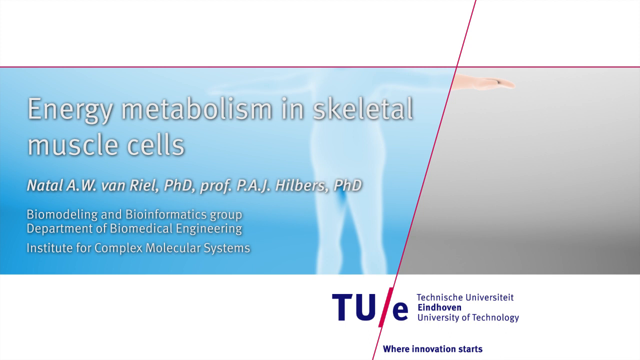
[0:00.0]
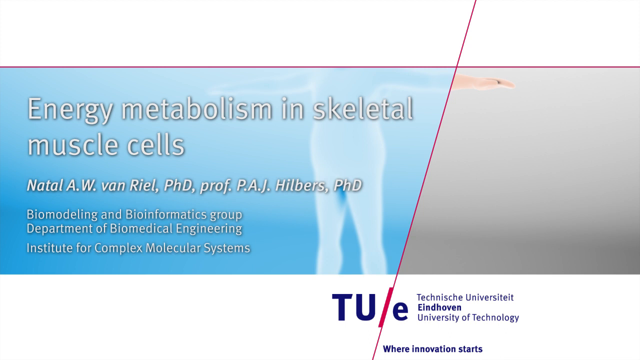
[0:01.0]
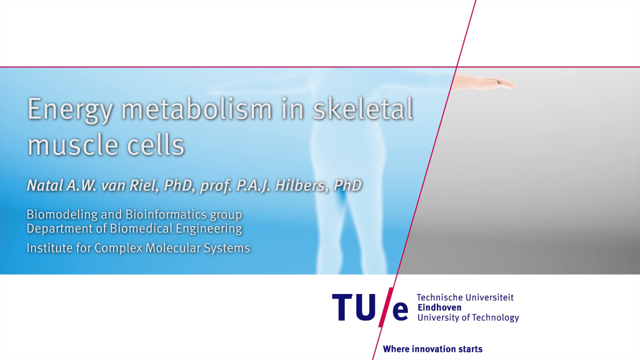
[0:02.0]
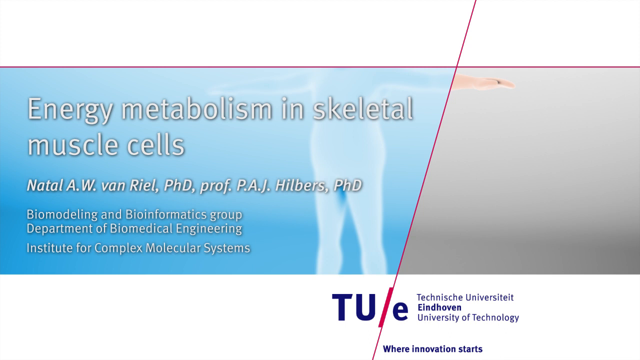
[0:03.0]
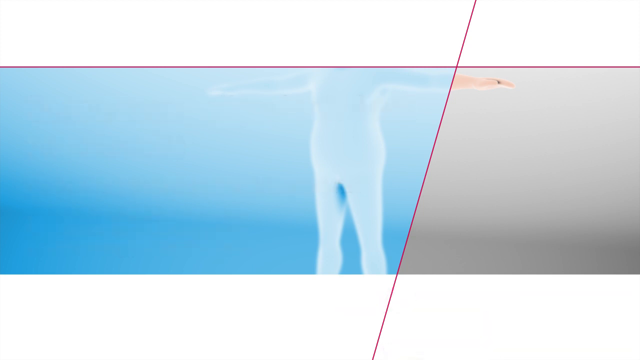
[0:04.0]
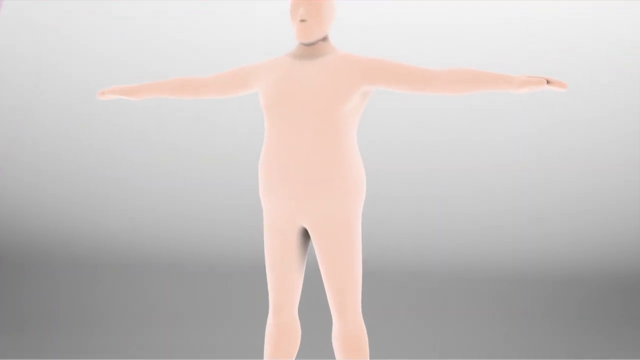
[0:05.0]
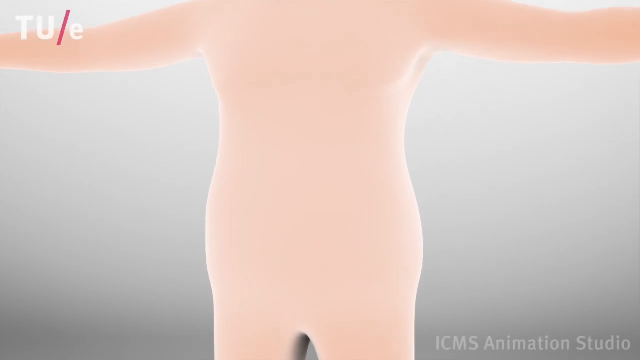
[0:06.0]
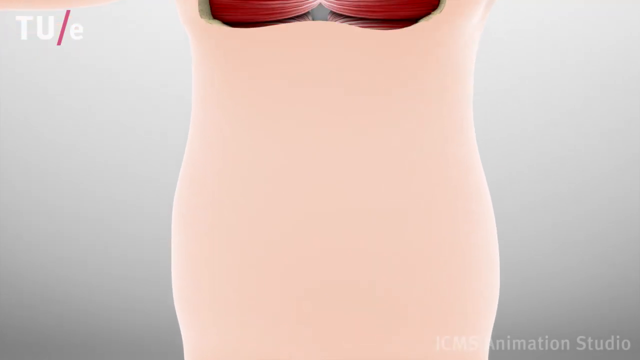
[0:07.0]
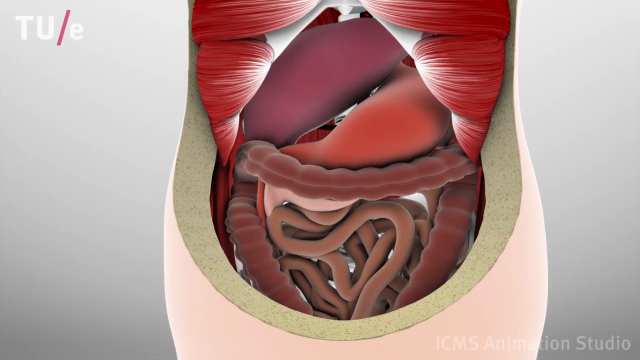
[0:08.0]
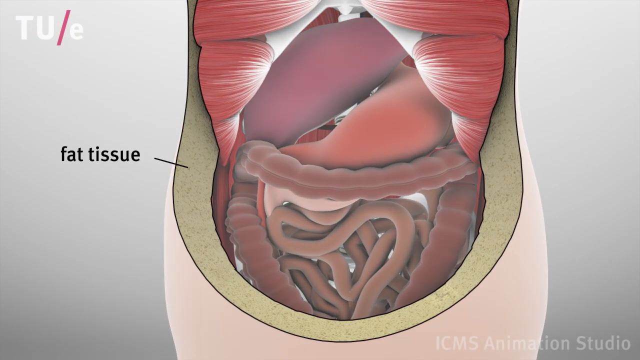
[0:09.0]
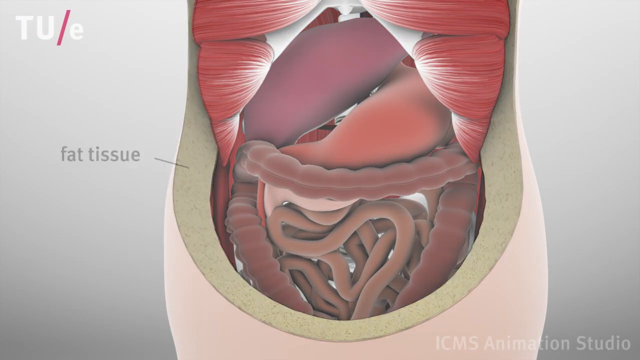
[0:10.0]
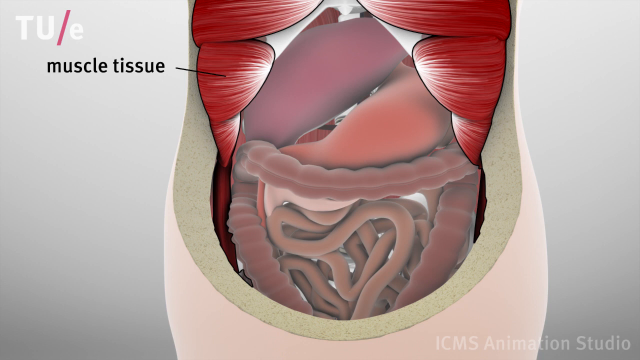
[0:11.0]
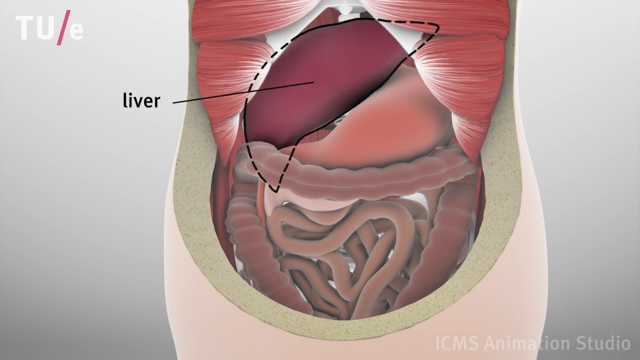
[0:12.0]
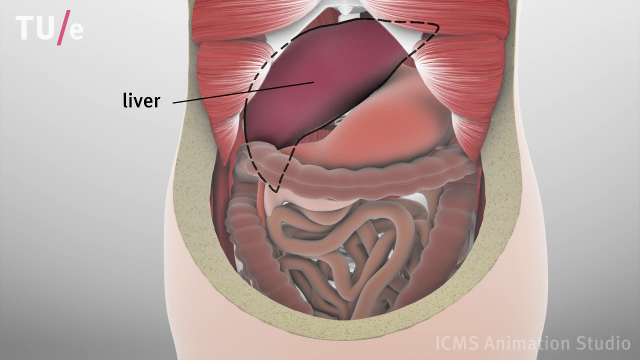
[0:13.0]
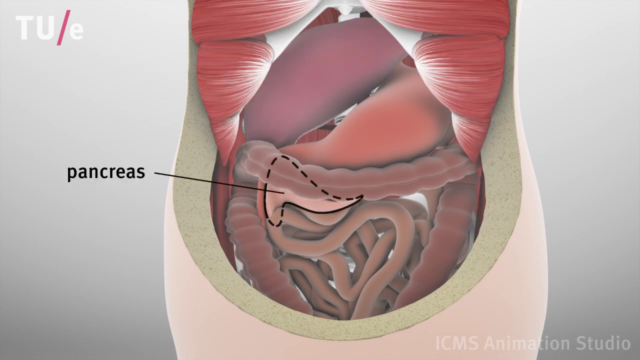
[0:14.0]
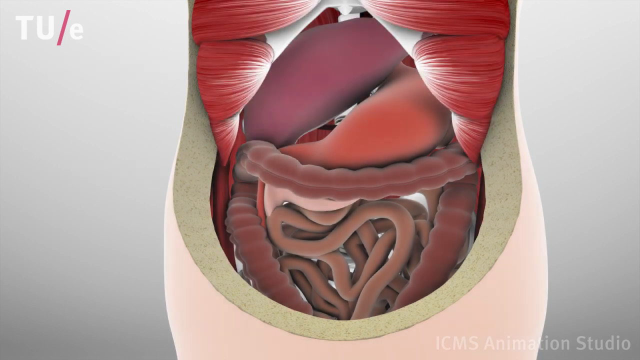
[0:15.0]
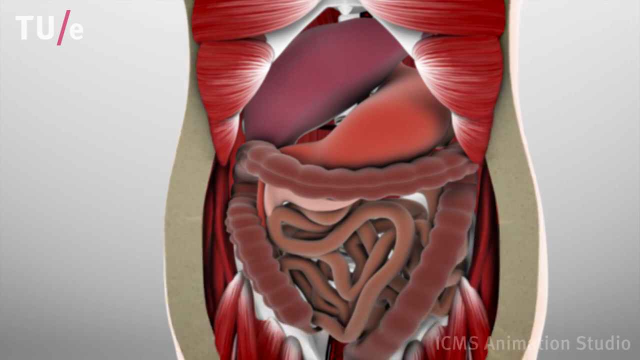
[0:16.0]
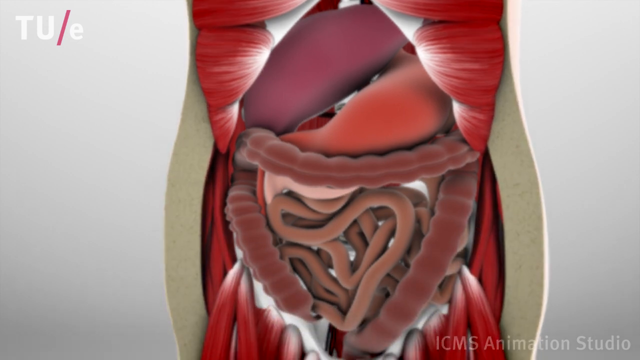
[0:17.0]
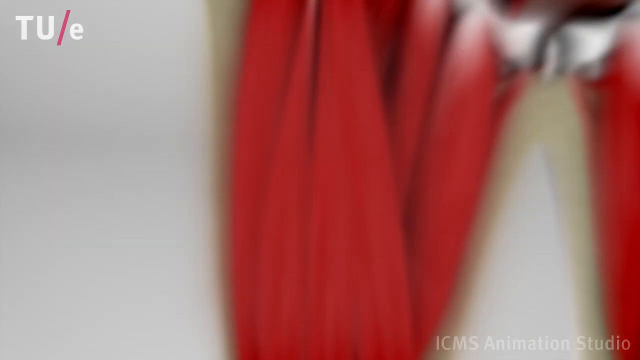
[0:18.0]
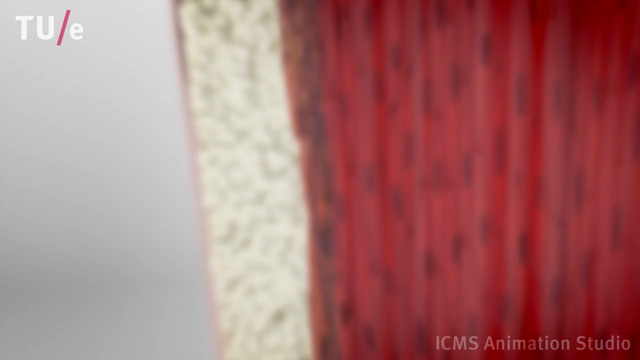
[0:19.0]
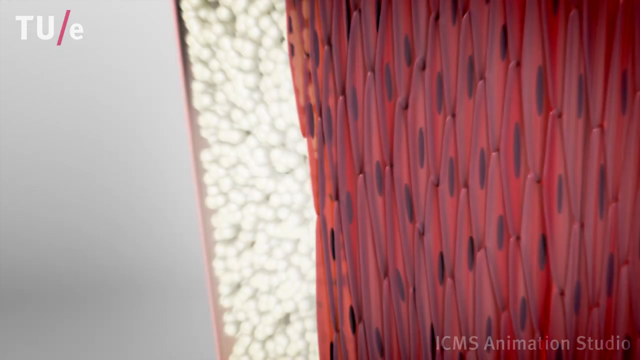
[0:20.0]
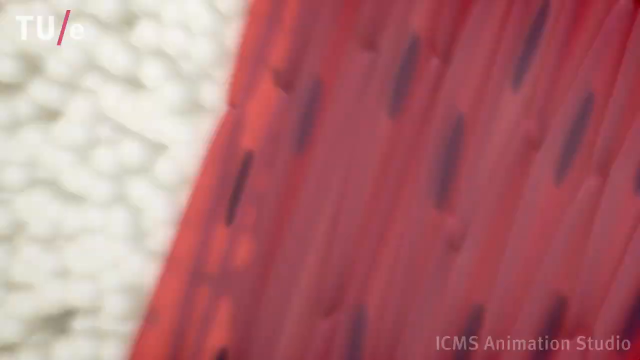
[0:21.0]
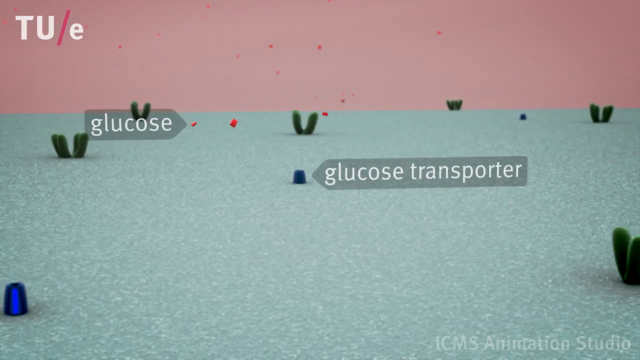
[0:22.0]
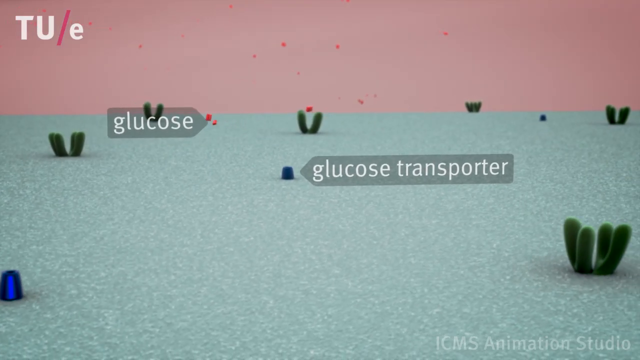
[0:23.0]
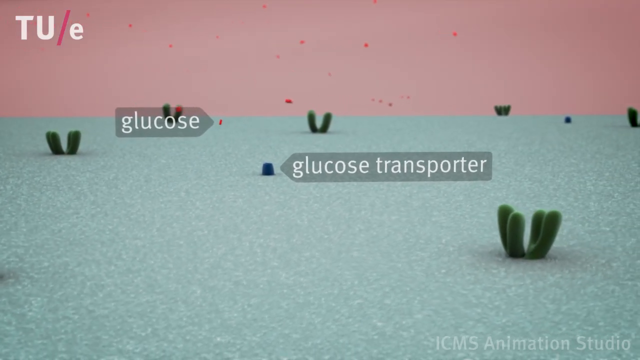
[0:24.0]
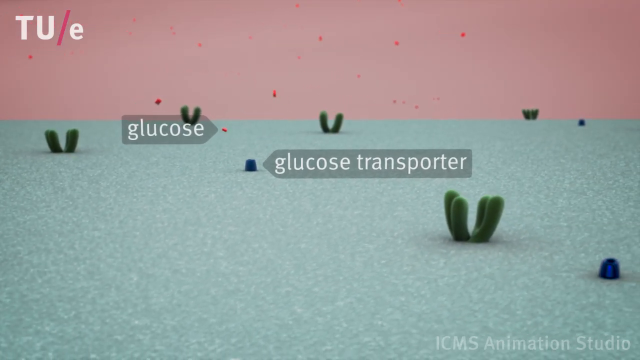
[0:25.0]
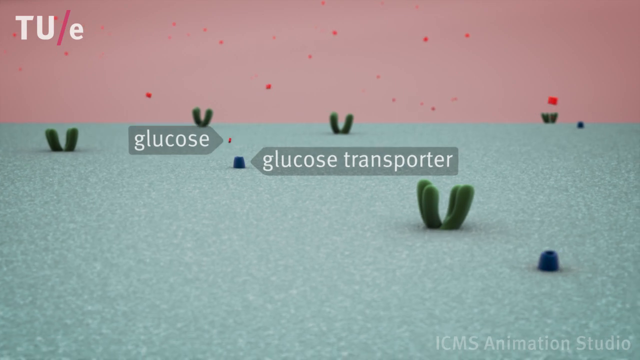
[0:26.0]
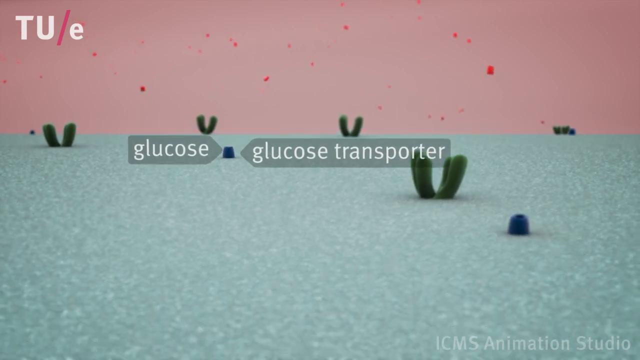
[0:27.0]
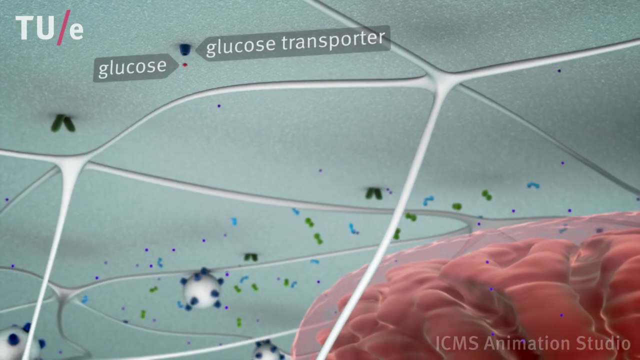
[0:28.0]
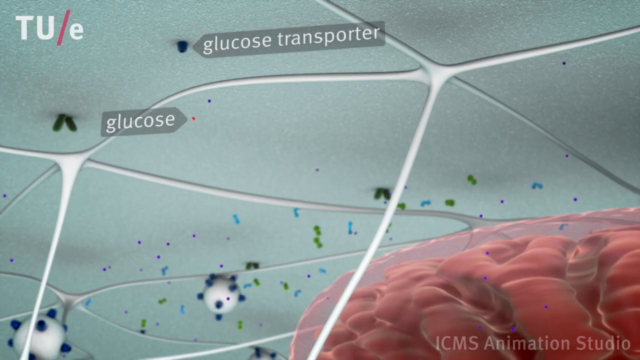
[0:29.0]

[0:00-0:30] The video concerns energy metabolism in skeletal muscle cells. Credits name Natal A.W. Van Ryle, PhD, professor P.A.J. Hilbers, PhD, the Biomodeling and Bioinformatics Group, Department of Biomedical Engineering, Institute for Complex Molecular Systems, with the Technische Universität, University of Technology. An animation shows the human body with the fat tissue, the muscle tissue, the liver and the pancreas. The view then moves to the lower abdomen and further down, showing more fat cells, glucose and glucose transporters.